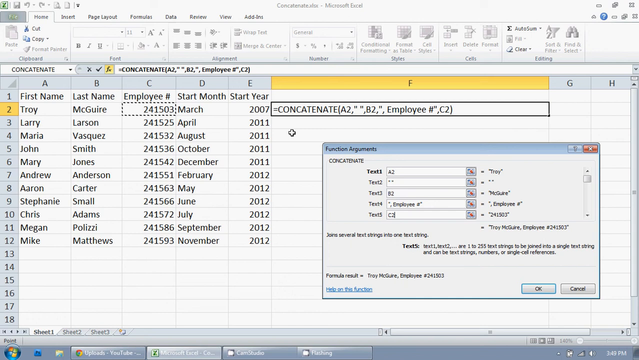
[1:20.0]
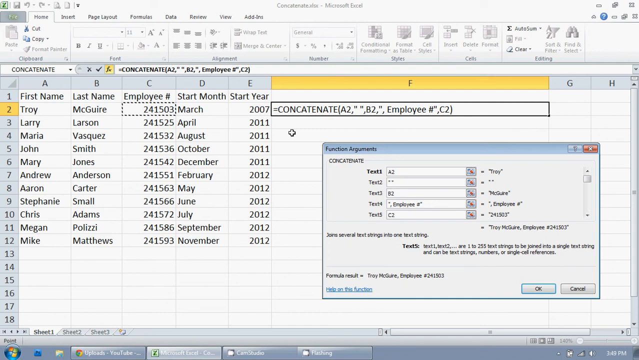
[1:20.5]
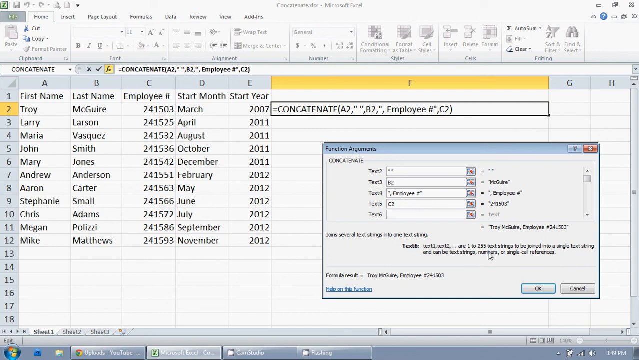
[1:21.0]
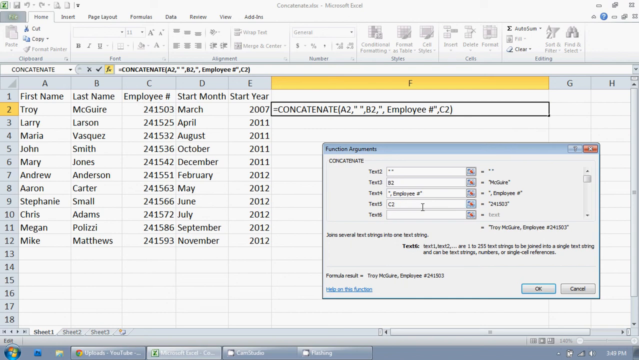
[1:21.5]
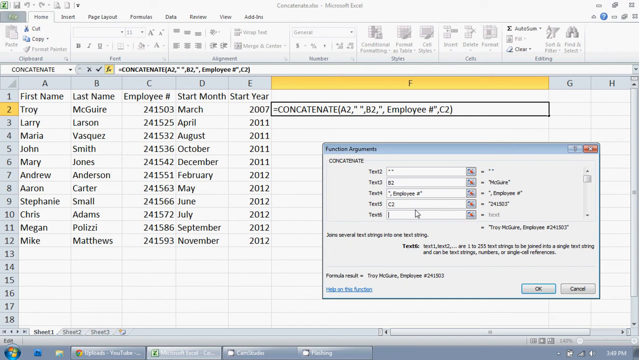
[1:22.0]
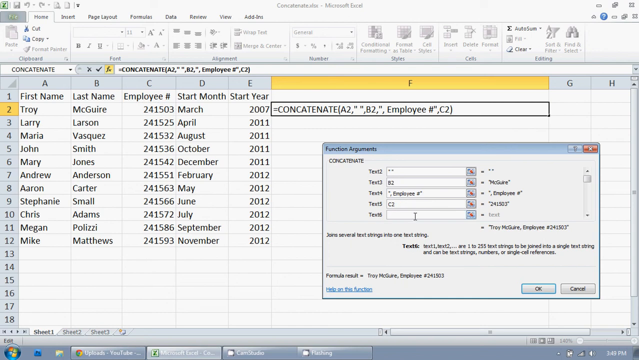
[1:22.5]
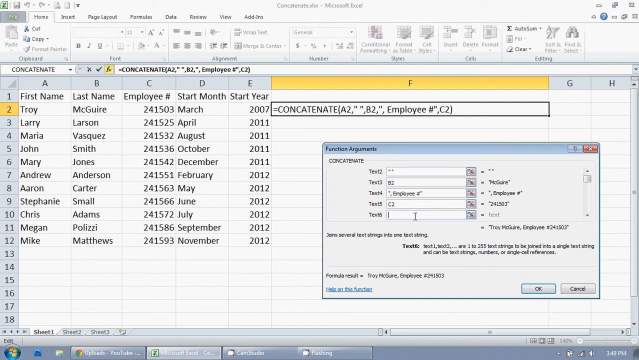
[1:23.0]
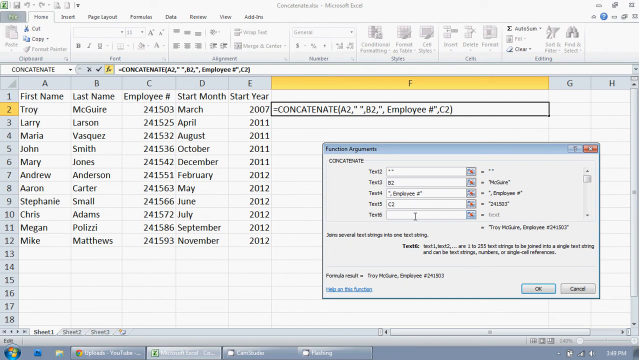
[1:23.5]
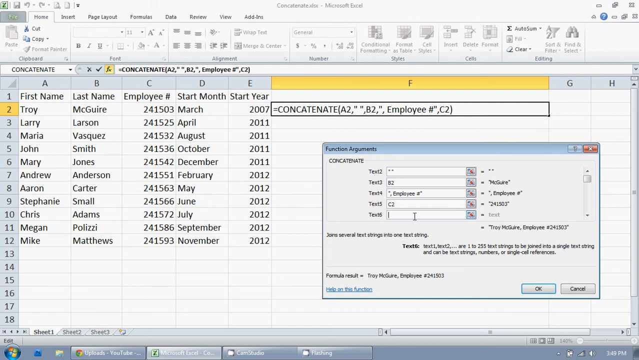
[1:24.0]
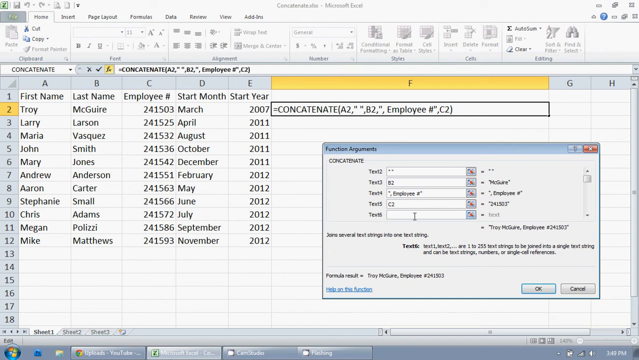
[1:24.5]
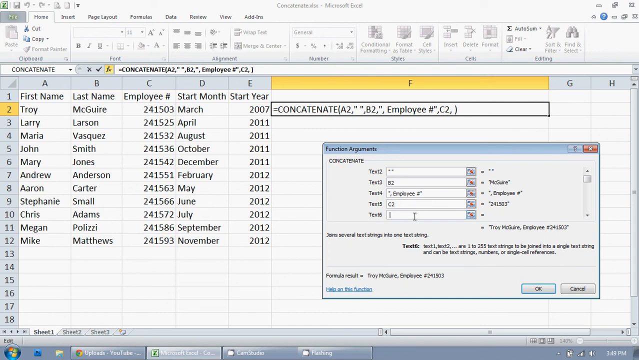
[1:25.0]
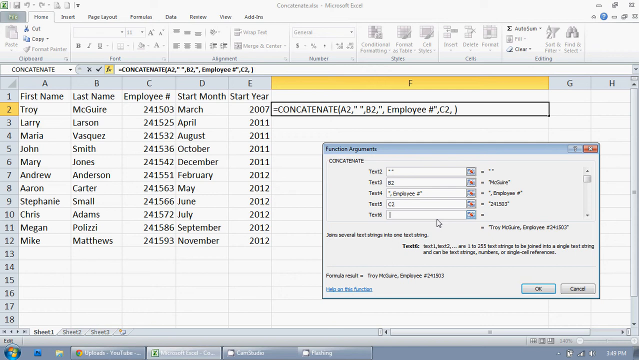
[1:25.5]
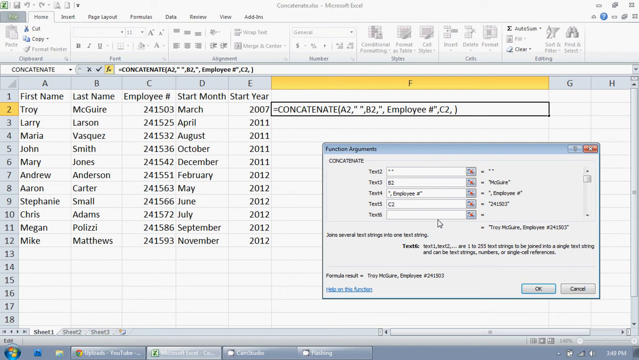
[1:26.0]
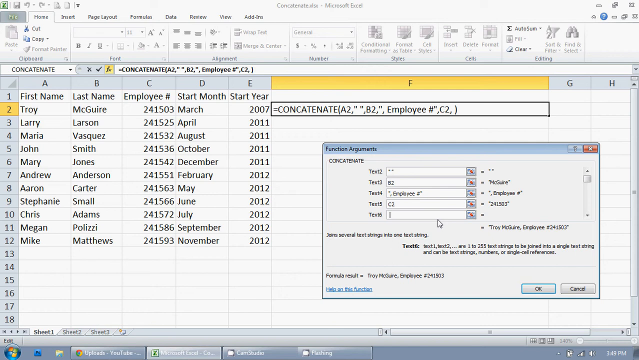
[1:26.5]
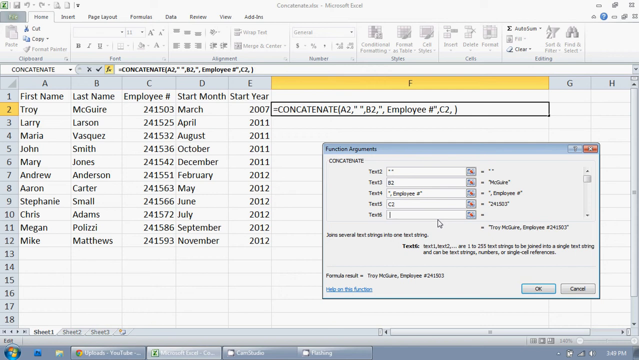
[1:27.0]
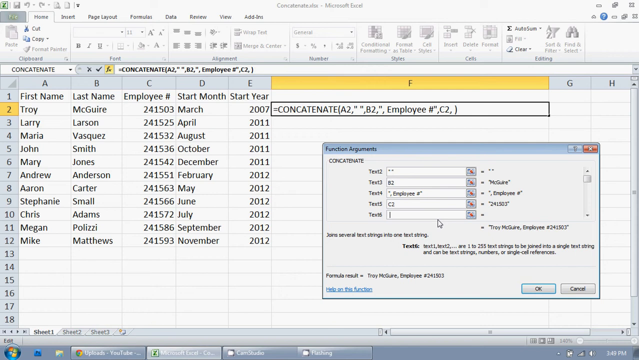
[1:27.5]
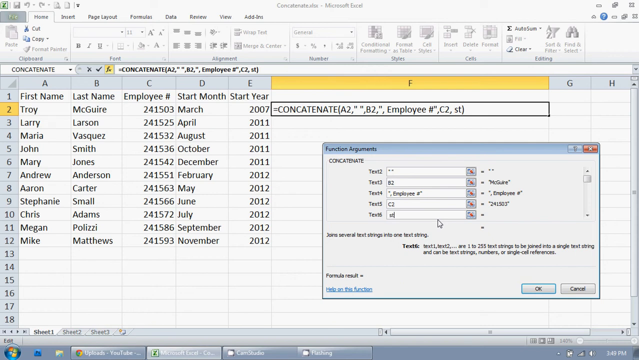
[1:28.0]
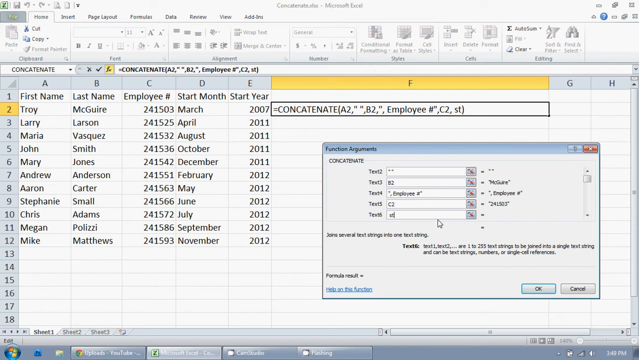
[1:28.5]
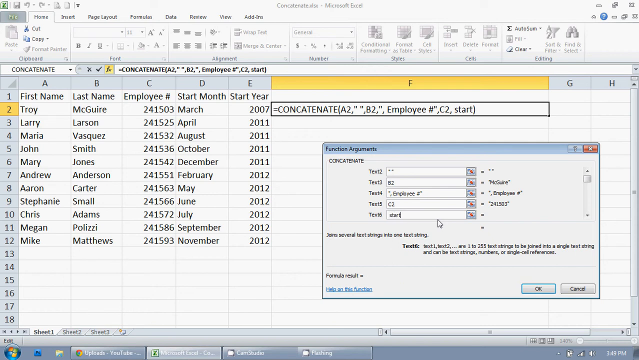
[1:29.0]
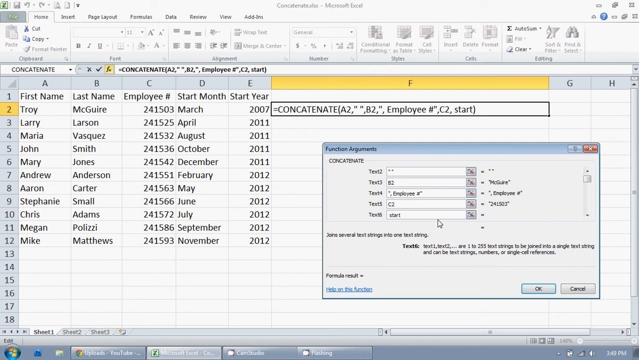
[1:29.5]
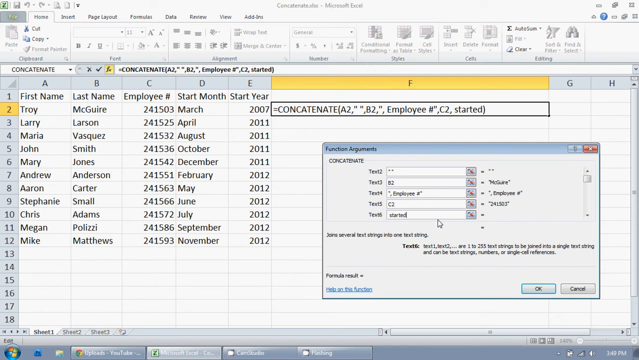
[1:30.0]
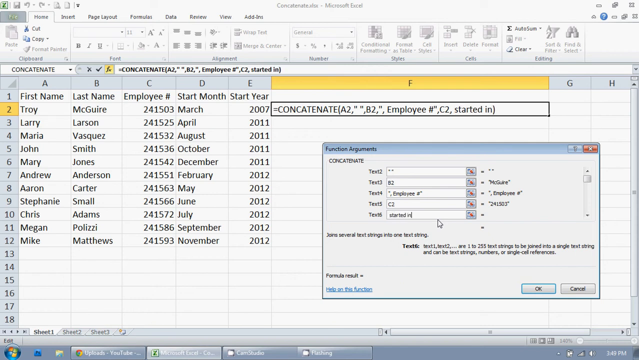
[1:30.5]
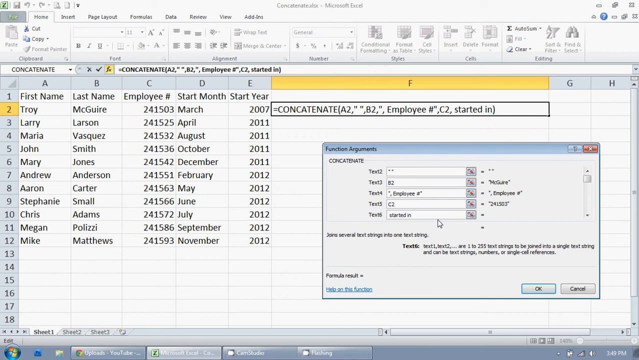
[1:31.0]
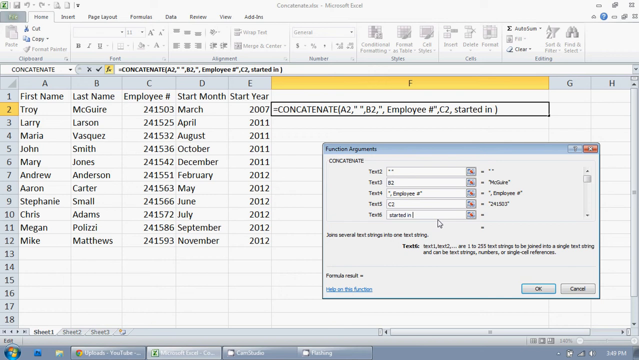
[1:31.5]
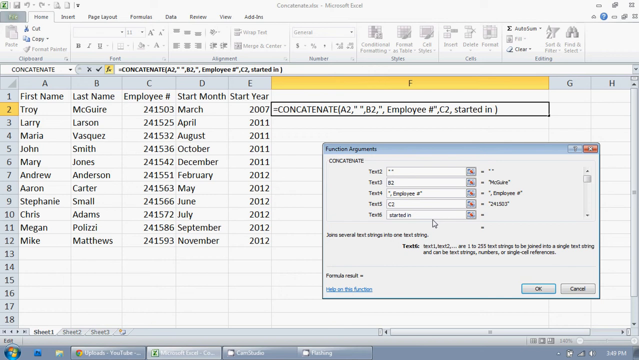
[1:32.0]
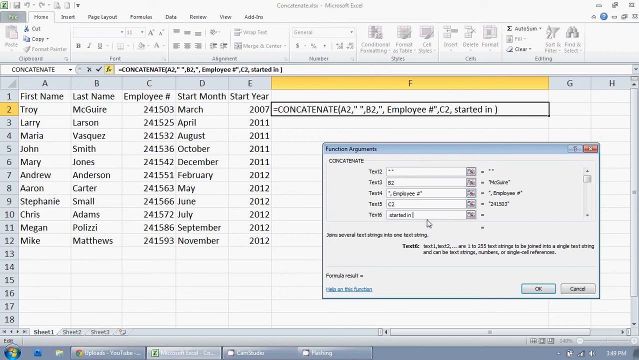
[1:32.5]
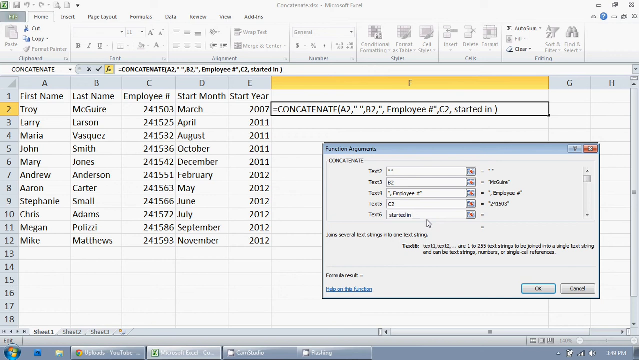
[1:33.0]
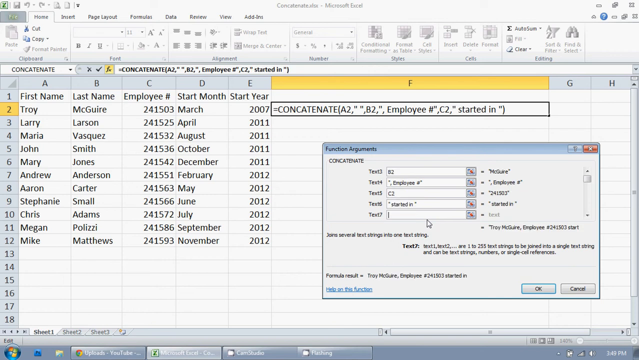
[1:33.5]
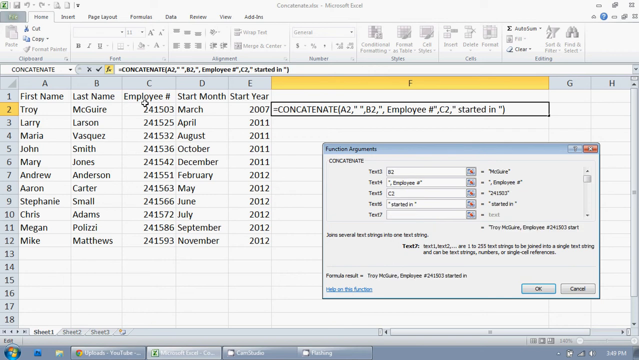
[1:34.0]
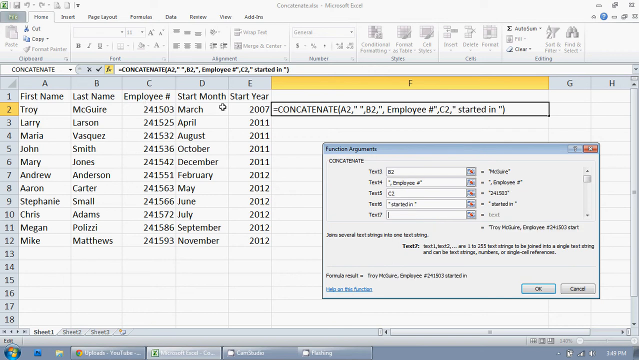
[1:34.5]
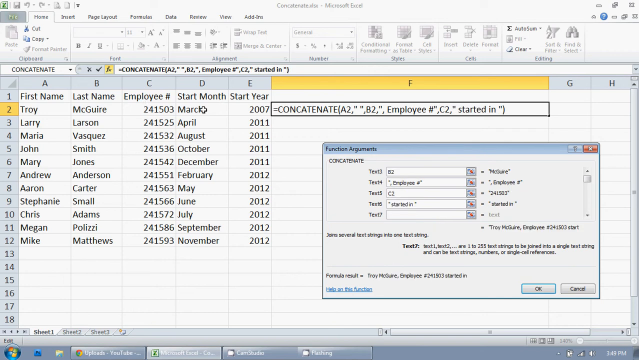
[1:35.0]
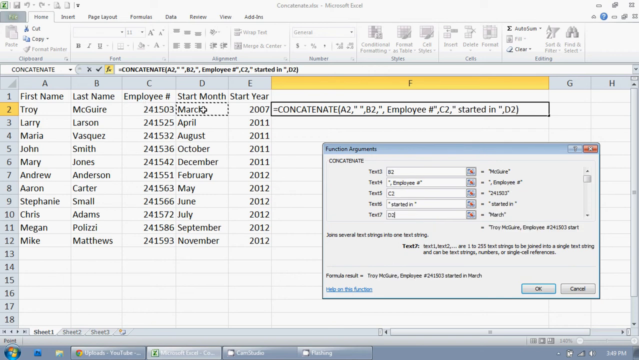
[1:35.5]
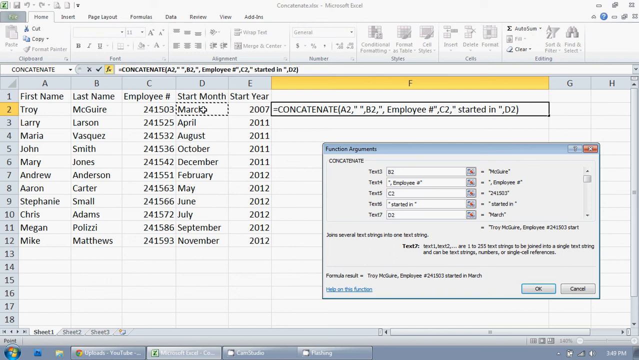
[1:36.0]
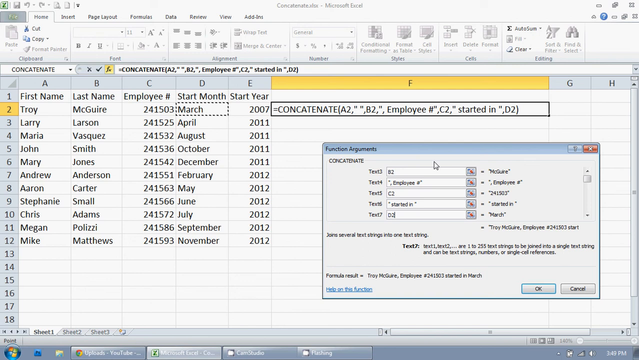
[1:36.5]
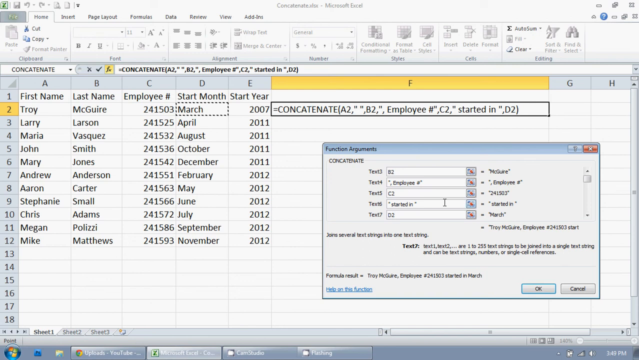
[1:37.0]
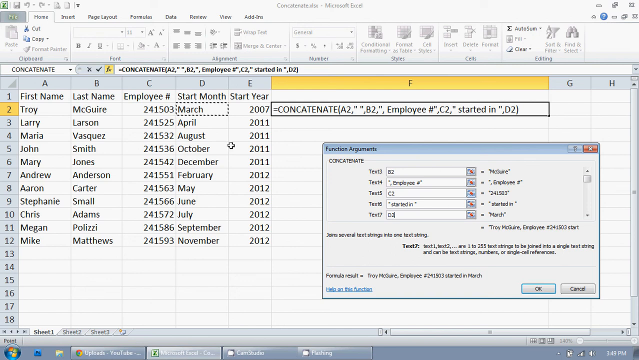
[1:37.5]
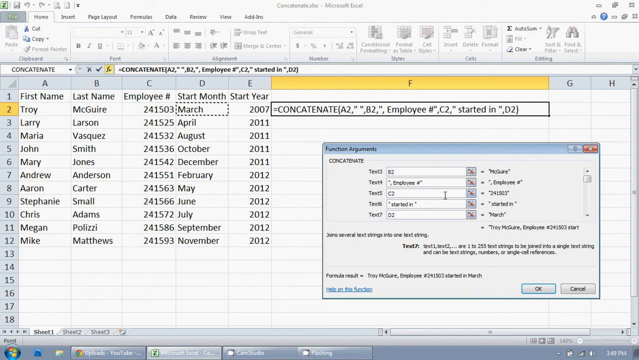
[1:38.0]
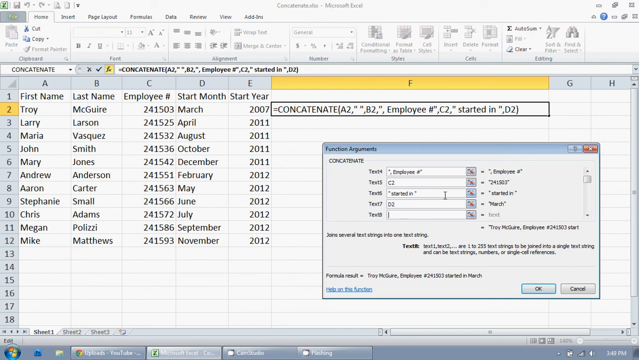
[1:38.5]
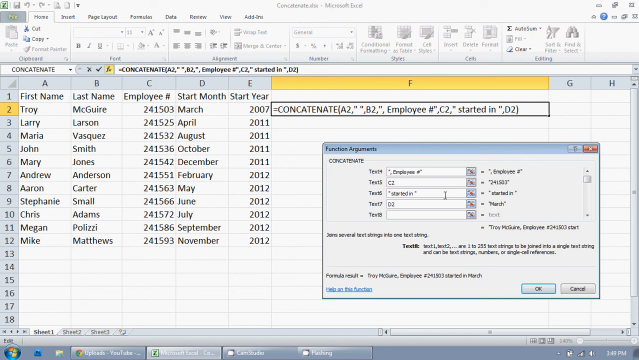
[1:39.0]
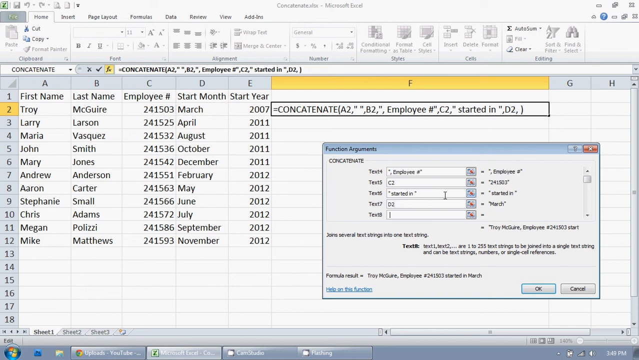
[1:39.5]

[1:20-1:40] The mouse moves to the text6 position and, with the cursor blinking, "started in" is entered in text6. The same content appears in the previously selected cell in row 2, column F, which has a black box. The mouse moves to the upper left and selects the cell in the second row of column D, which contains March, Troy's start month. The function now has lines from text1 to text7, containing a2, b2, employeeNumber, c2, started in, and d2. The content reads "=CONCATENATE (A2," ", B2, employee #, "C2", "Started in", D2)". Only the selected black-framed cell is changed; the contents of the other cells remain unchanged.